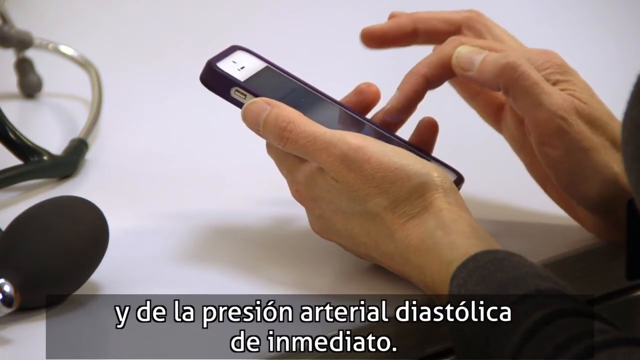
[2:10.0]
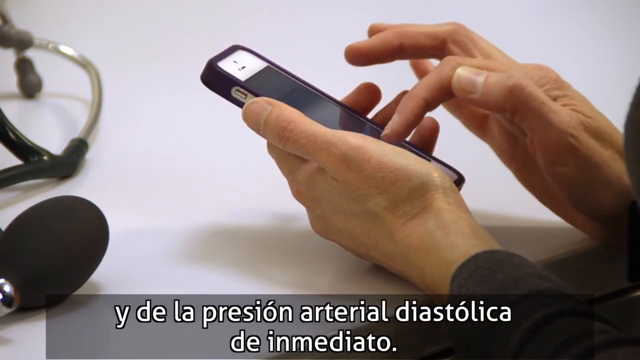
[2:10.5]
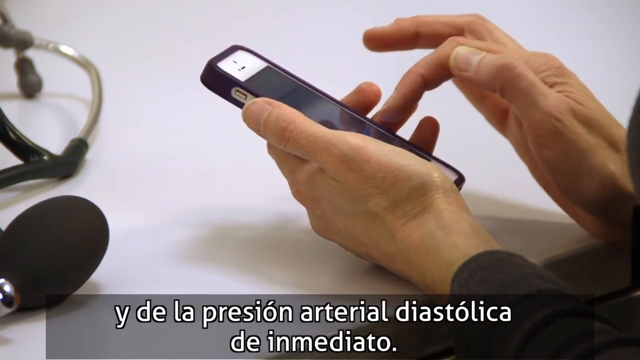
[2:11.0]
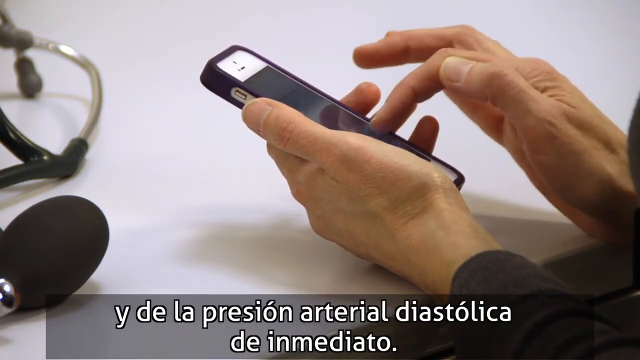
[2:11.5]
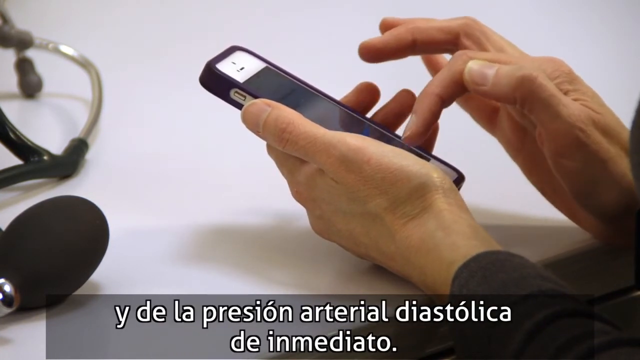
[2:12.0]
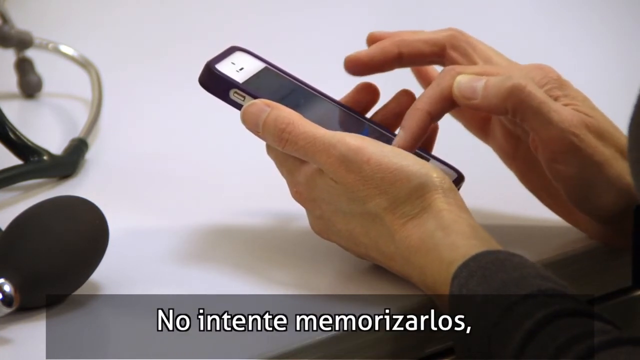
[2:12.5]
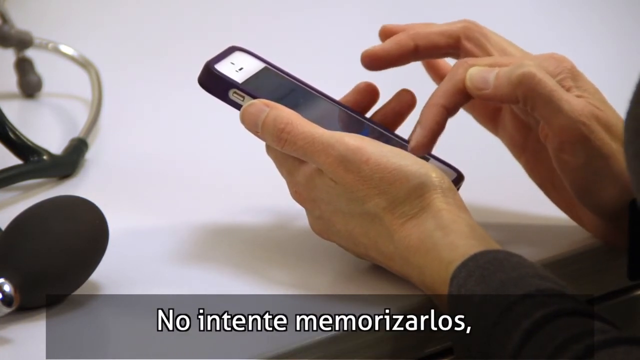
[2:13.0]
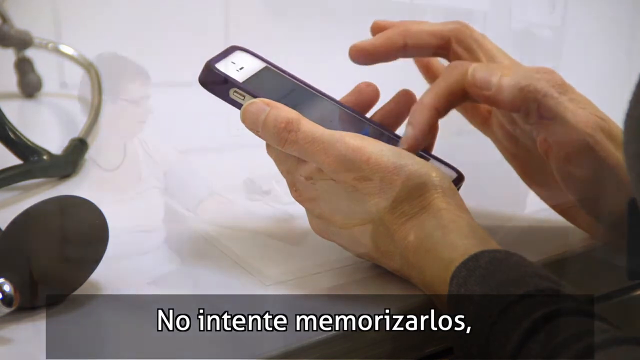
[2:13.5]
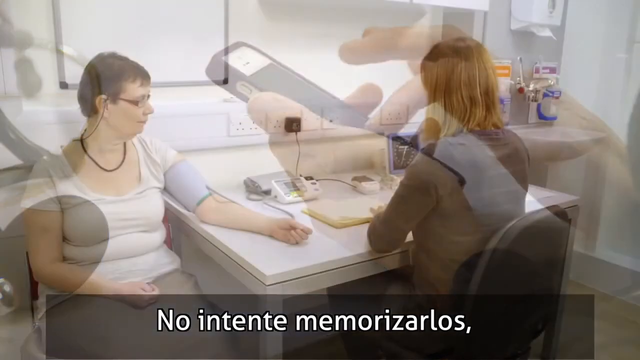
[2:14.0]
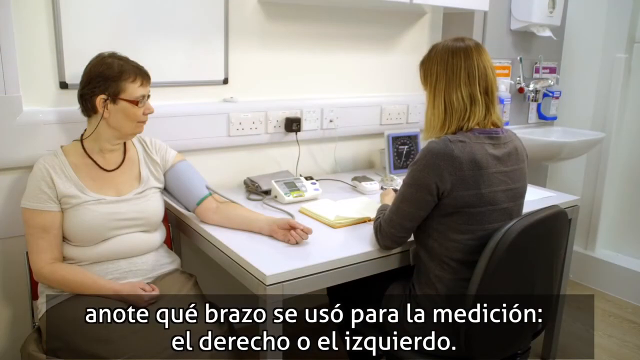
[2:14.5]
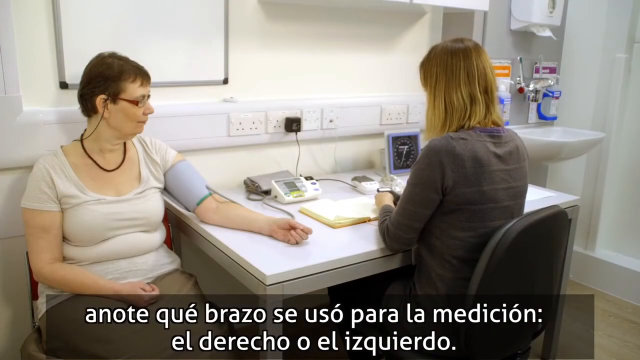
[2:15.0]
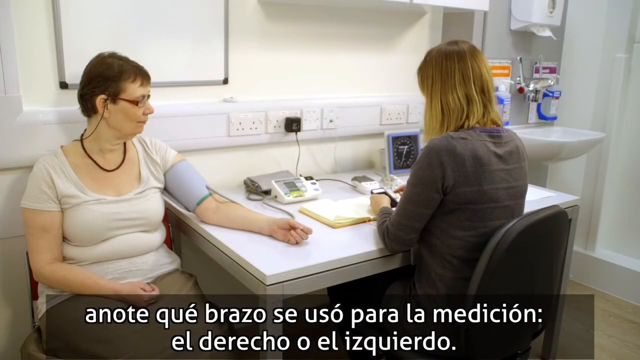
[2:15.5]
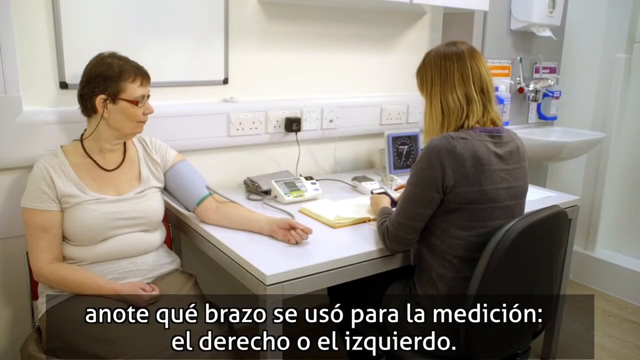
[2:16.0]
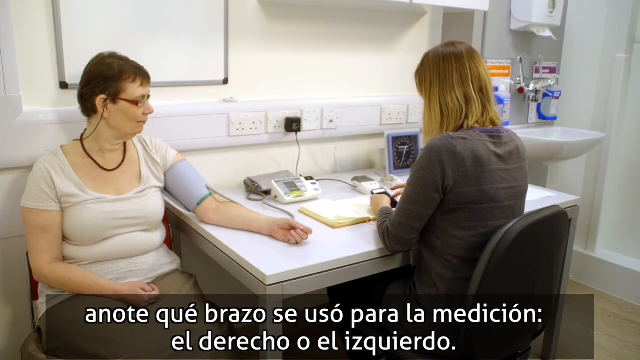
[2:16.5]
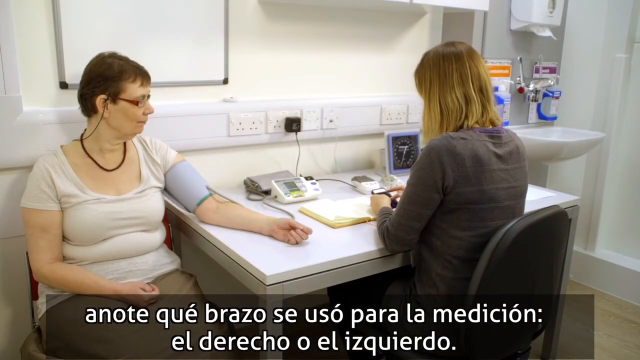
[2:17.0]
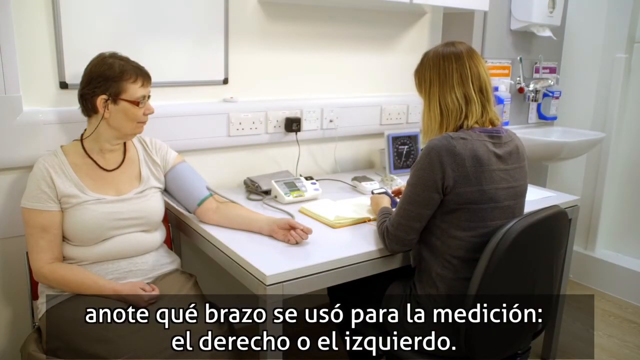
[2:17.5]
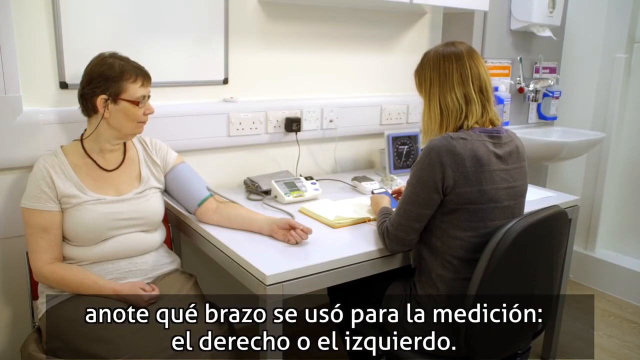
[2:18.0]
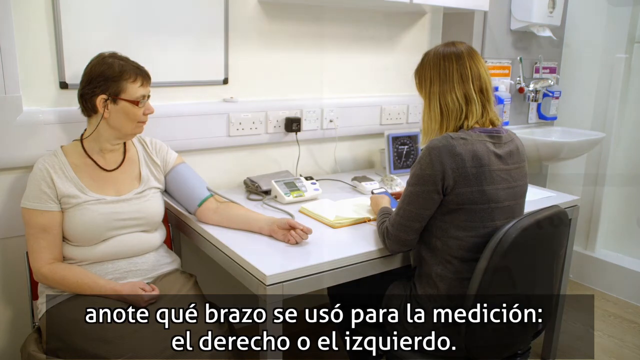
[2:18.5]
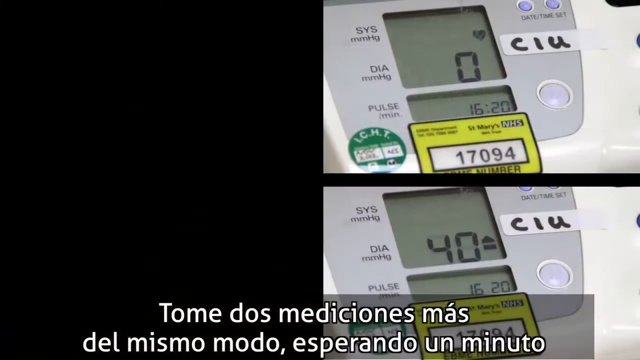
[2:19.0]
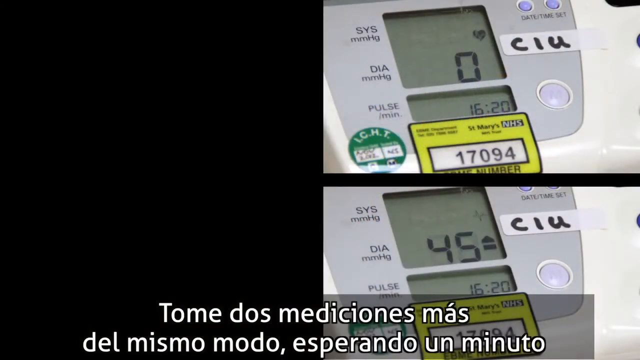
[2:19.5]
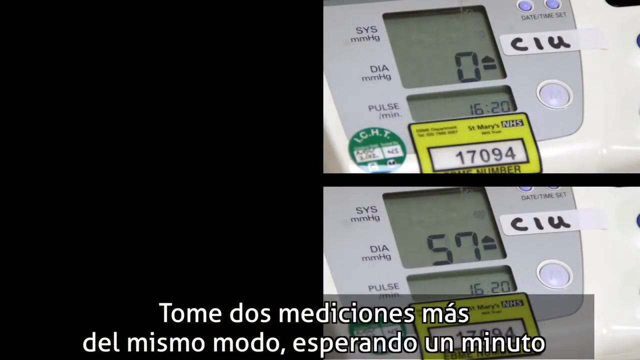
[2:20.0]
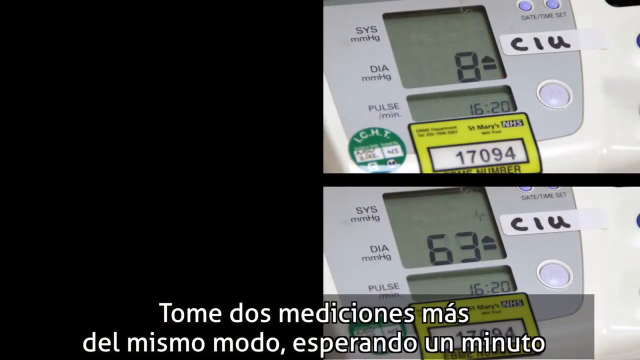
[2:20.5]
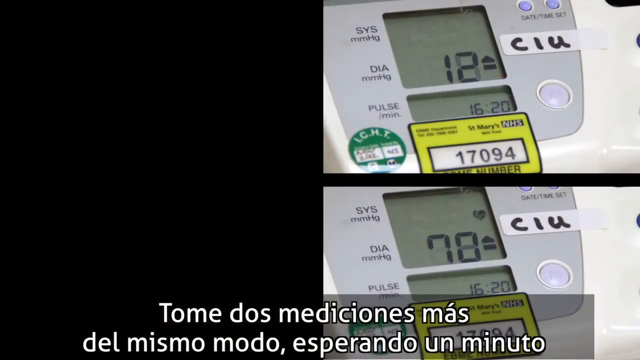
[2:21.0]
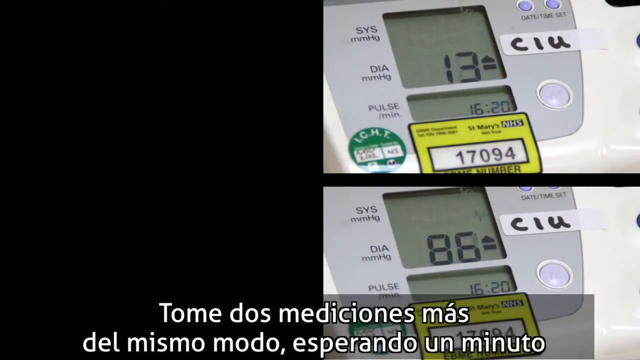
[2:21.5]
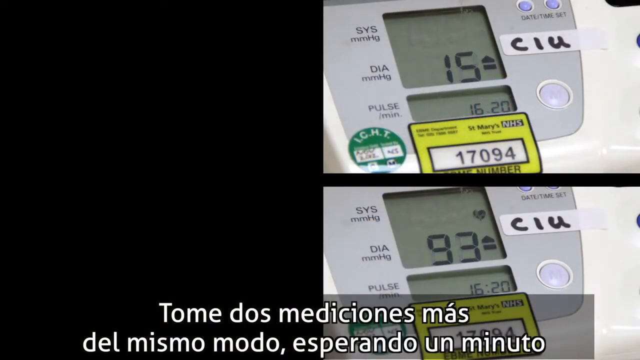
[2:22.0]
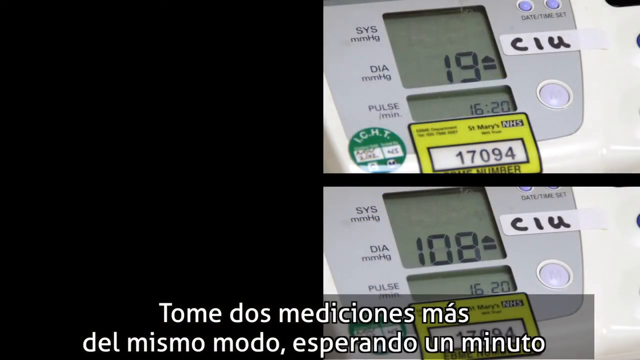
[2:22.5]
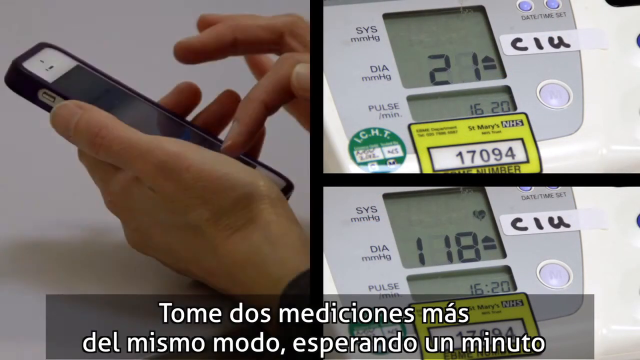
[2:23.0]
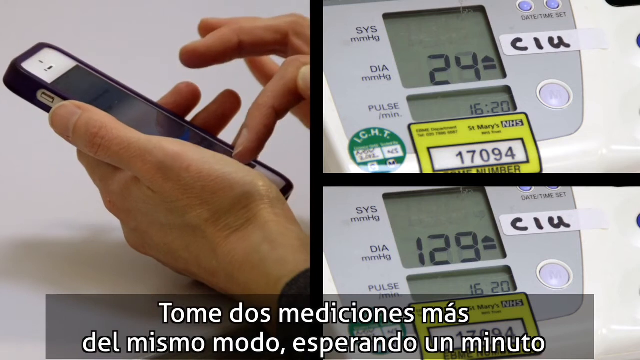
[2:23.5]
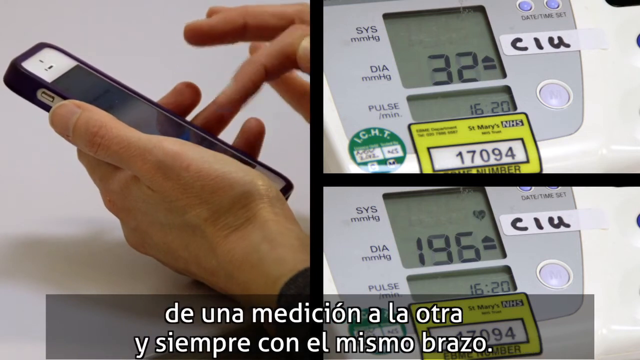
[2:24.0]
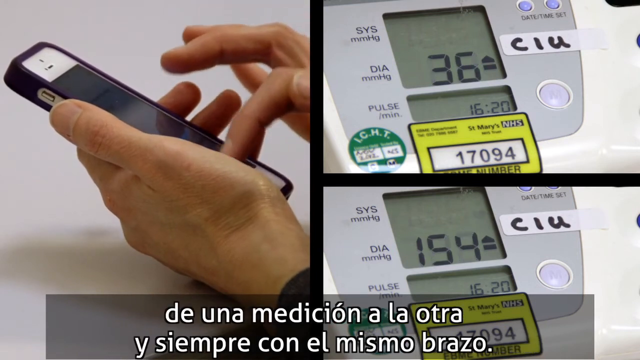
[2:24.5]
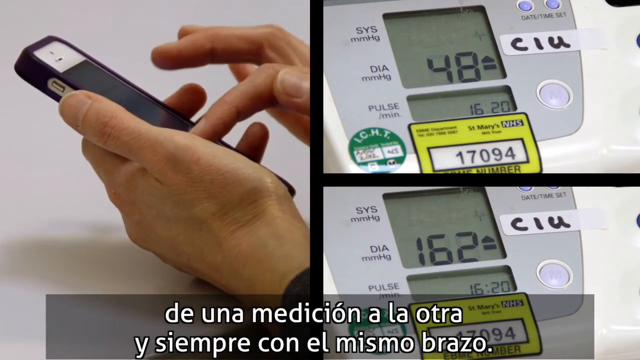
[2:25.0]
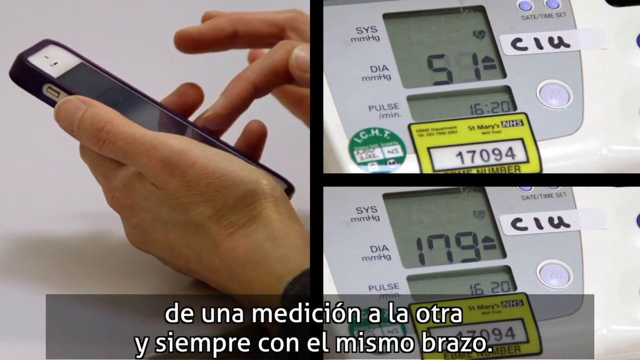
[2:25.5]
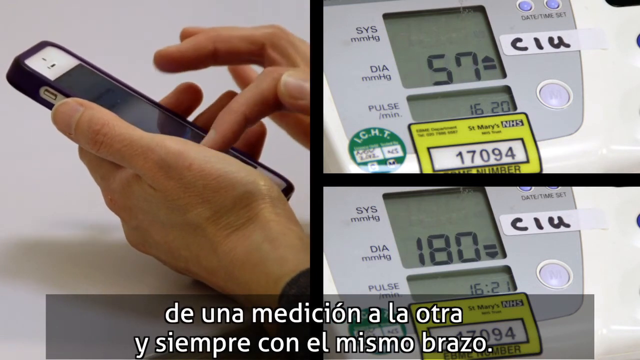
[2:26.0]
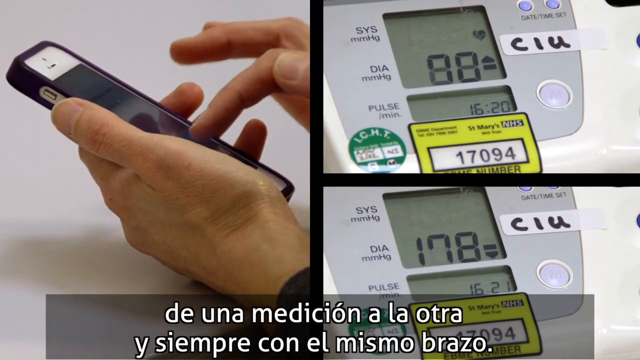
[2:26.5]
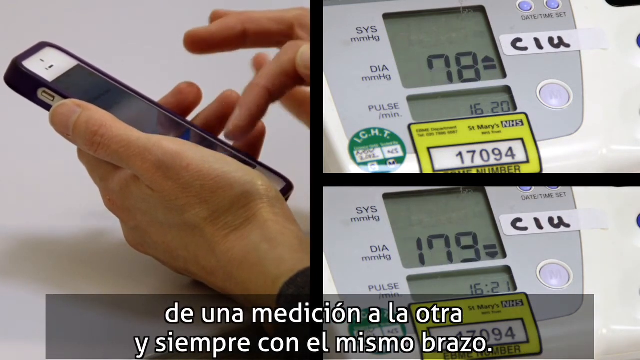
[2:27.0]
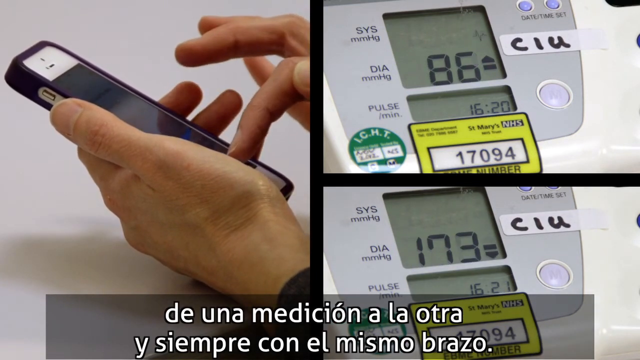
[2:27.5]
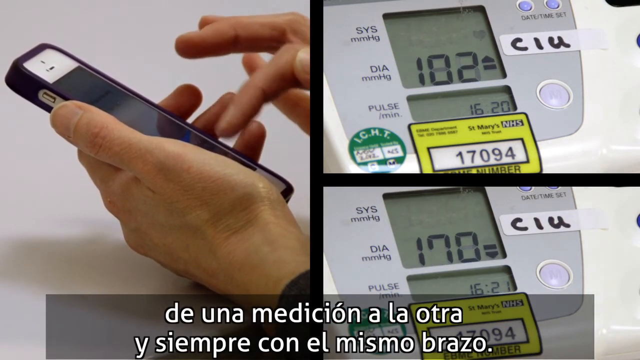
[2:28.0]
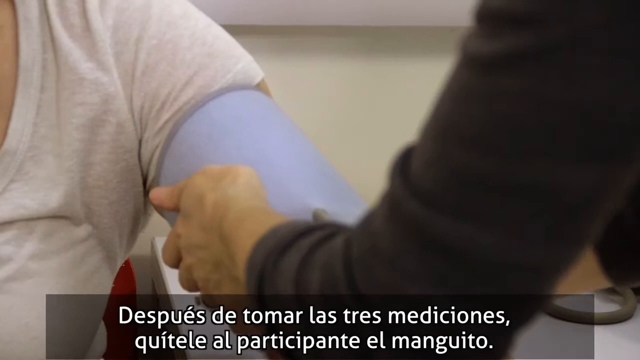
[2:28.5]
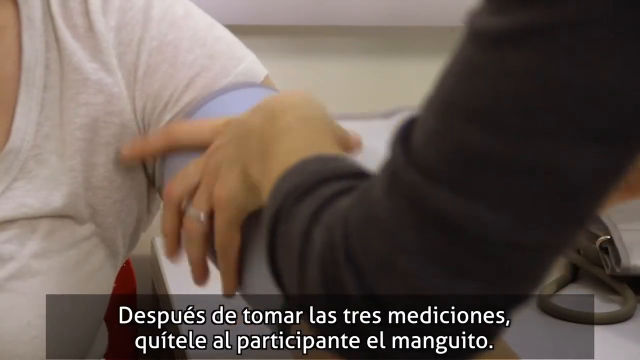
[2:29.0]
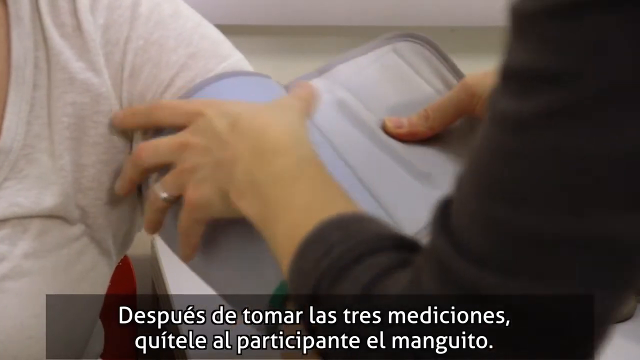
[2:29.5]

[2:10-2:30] The view is zoomed in on a person's hands typing on a cell phone with a pointer finger, possibly checking the correct numbers for the blood pressure. Two boxes appear on screen, the top one with the lower number and the bottom one with the higher number, showing the blood pressure was a little elevated. A yellow sticker on the blood pressure monitor shows an "EBME" number, "17094." The woman typing is white, has long thin fingers with short fingernails, and her phone has a black case.